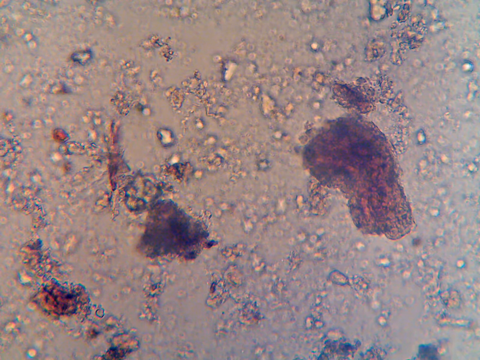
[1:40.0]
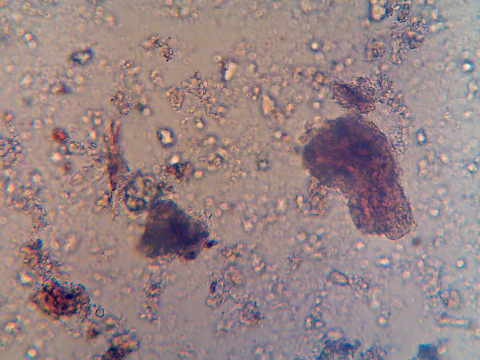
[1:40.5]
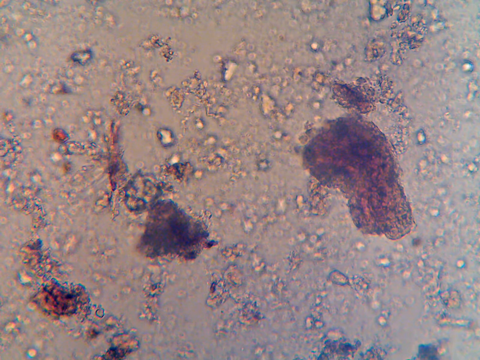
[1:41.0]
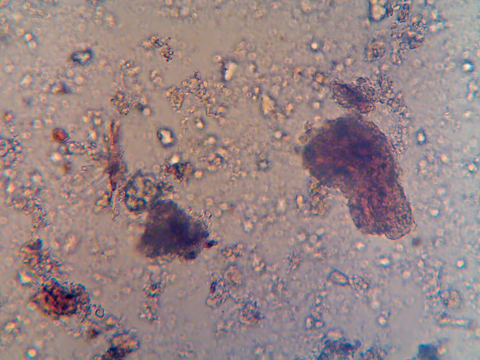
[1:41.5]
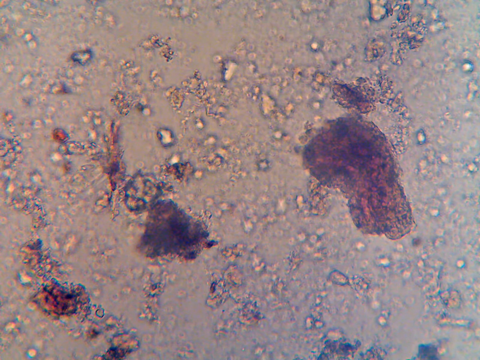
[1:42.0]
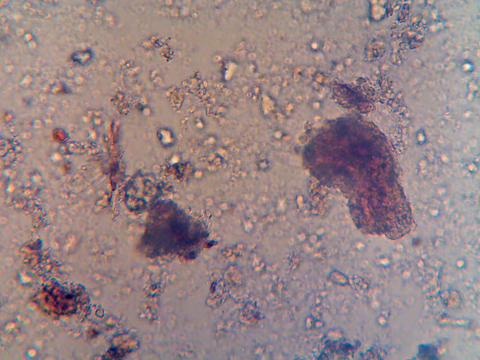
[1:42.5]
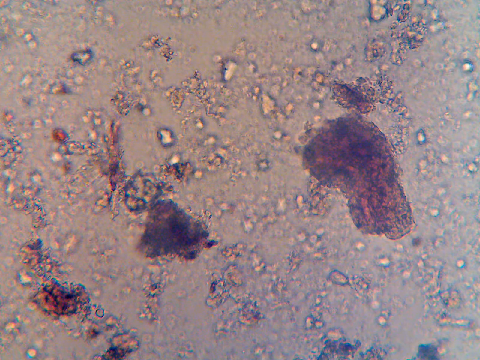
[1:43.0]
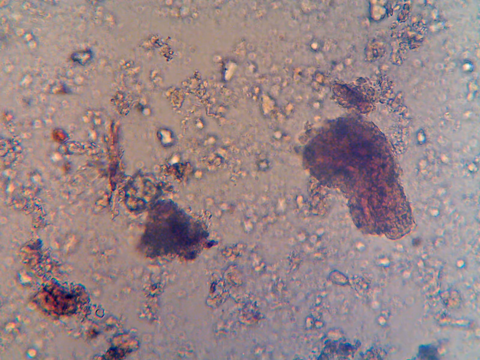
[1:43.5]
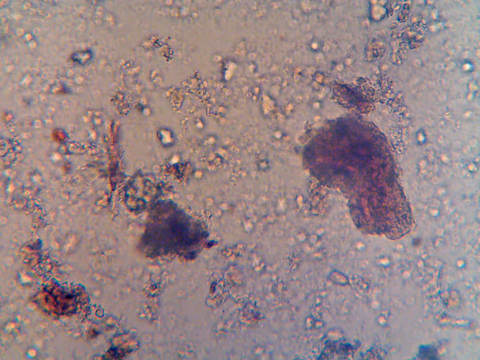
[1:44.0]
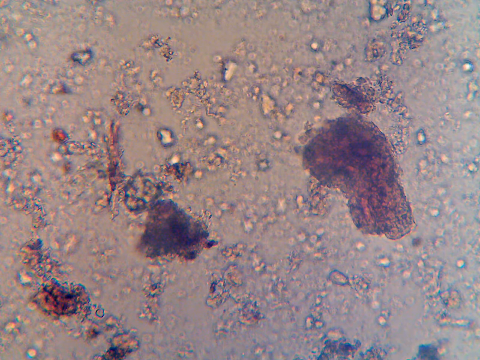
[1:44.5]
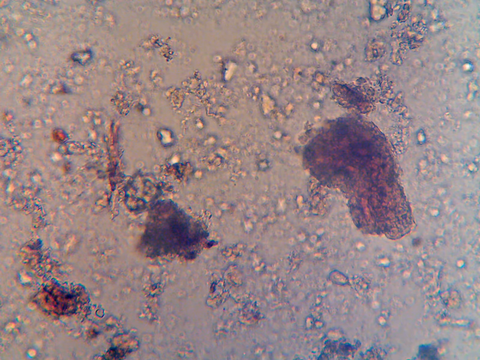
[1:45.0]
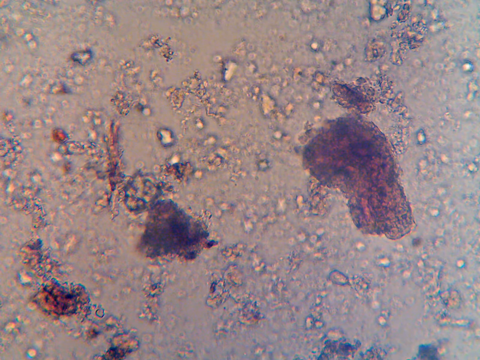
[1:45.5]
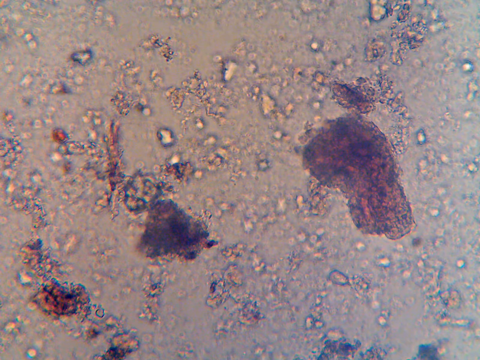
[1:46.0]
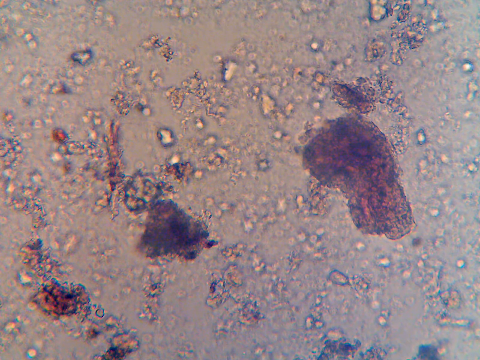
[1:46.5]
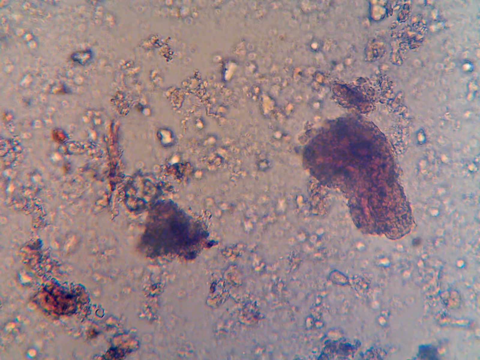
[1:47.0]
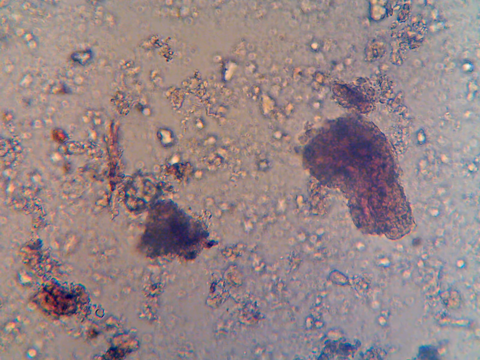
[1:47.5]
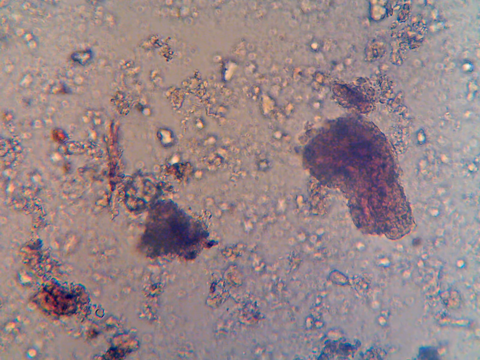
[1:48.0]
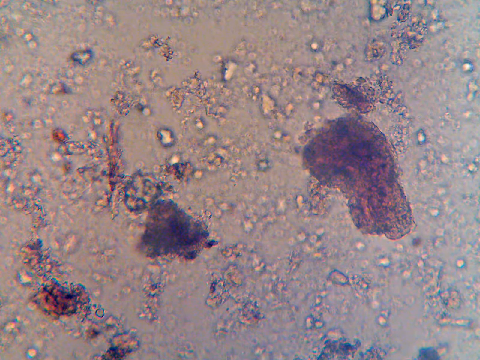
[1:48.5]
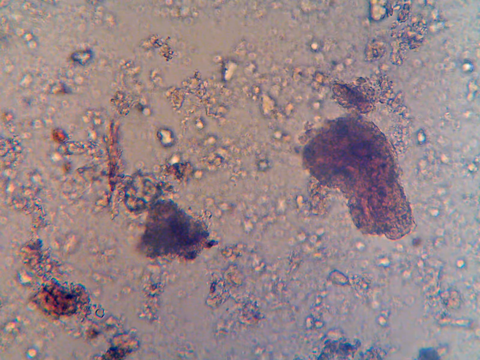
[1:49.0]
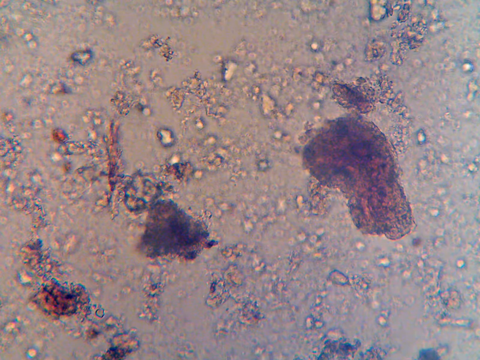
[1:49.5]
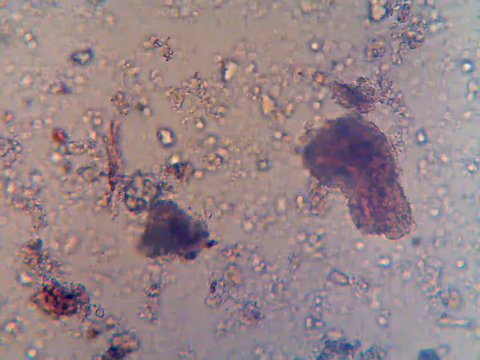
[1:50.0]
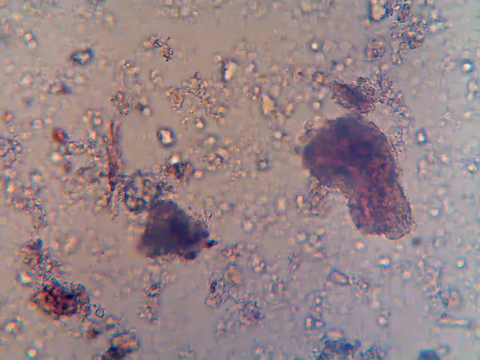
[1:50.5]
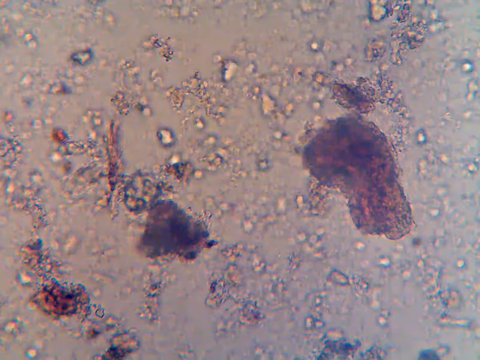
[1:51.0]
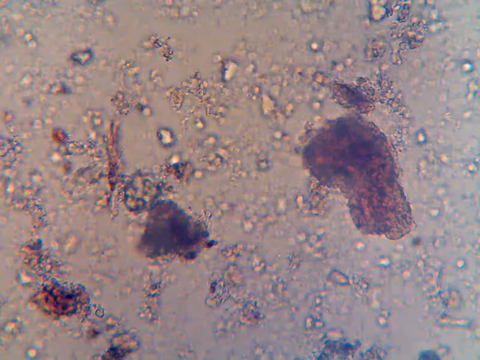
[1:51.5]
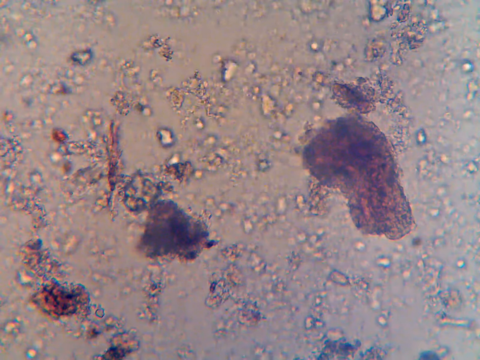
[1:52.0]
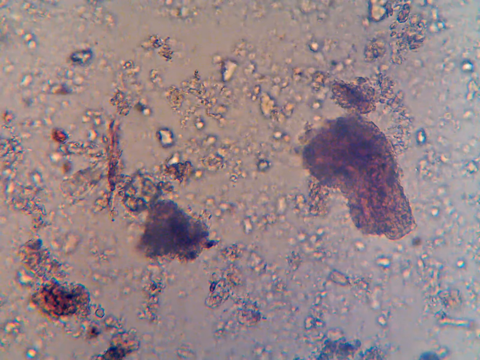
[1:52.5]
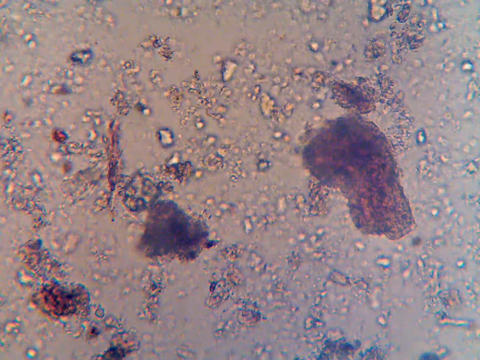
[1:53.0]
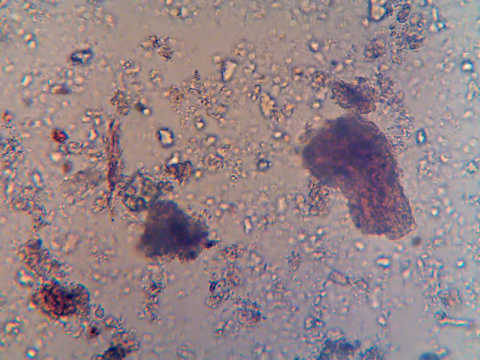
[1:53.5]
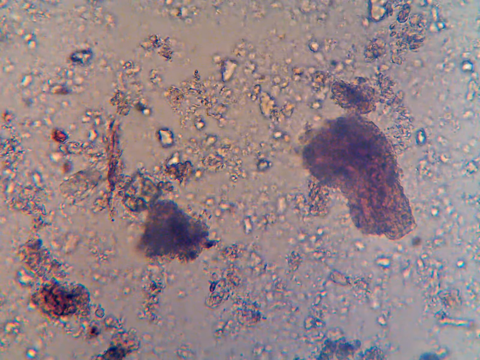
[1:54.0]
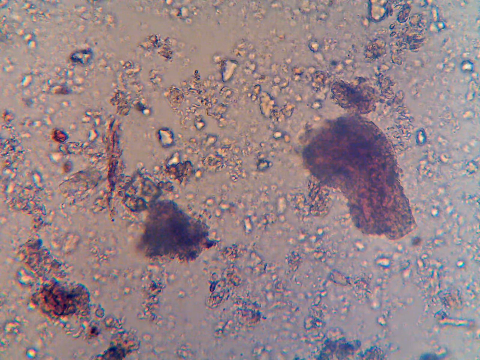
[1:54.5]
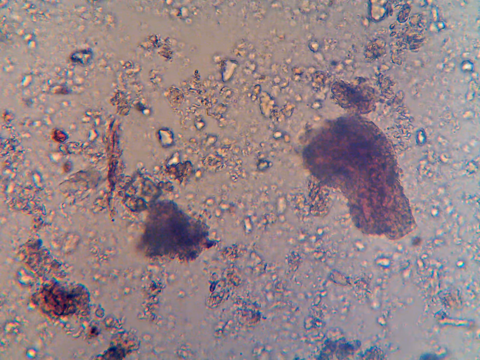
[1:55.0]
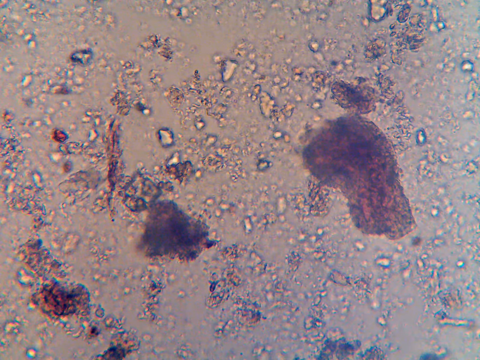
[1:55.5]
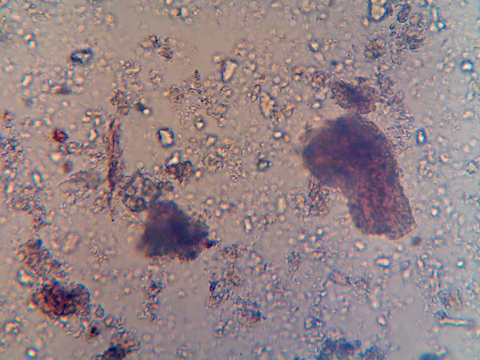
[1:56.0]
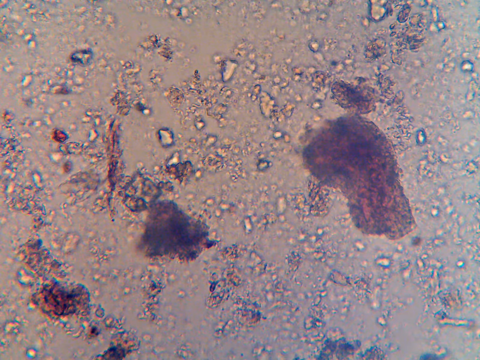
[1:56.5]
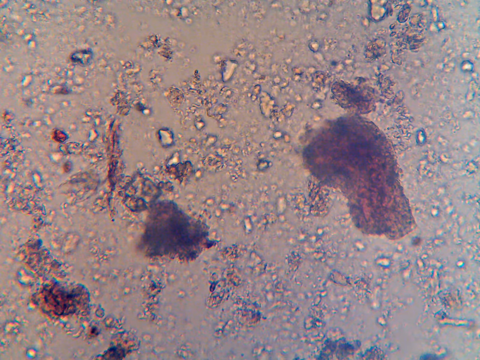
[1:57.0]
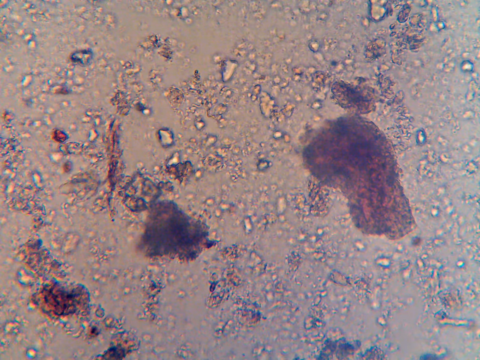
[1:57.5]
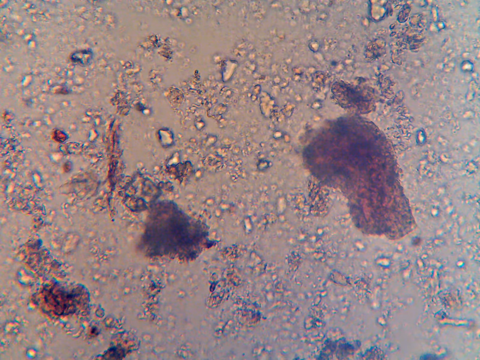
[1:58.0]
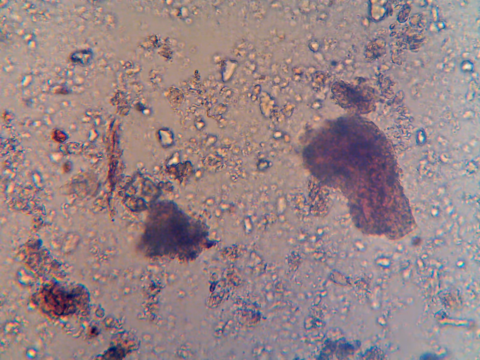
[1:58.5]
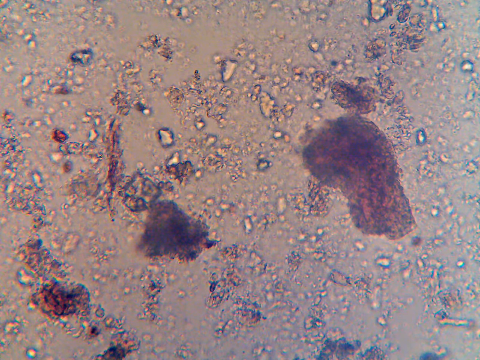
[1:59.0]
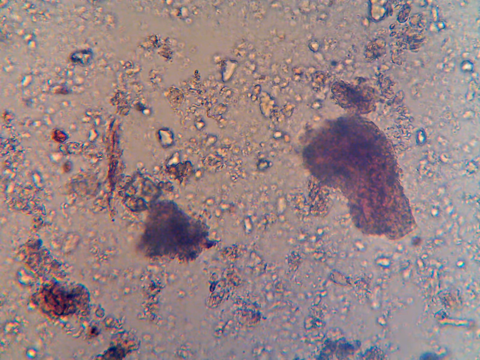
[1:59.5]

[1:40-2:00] The view appears to be through an electronic microscope at some unidentified sample, and very little changes. One area of blurriness shifts over time, making it look like something is changing, though it is hard to tell what is happening. The background is beige-brown with round areas that look like blobs, mostly in a color close to the background, with a dark area surrounding them that makes them stand out. Three larger blobs are much darker: one in the bottom left, one slightly higher and more to the right, and one in the center almost all the way to the left. They are more irregular in shape and fixed in place; nothing happens with them.